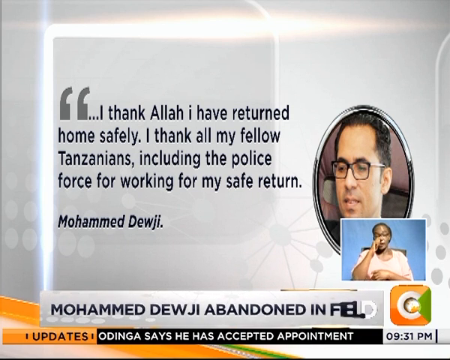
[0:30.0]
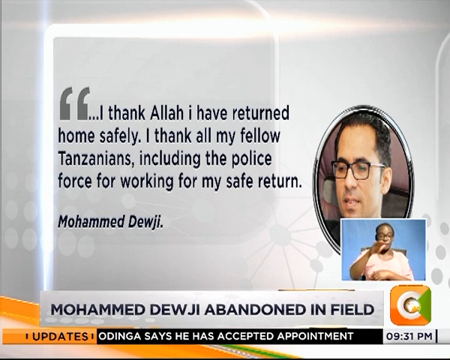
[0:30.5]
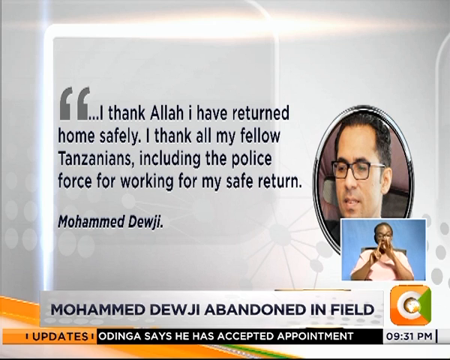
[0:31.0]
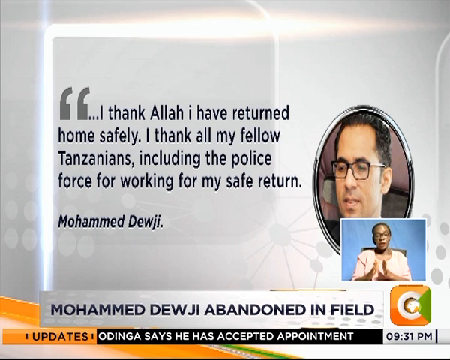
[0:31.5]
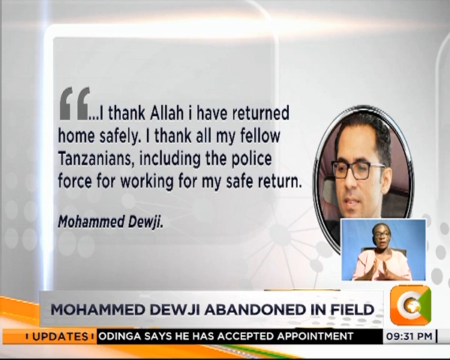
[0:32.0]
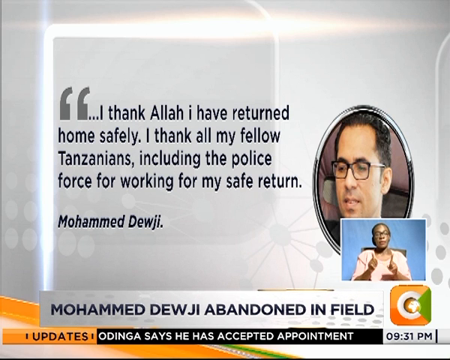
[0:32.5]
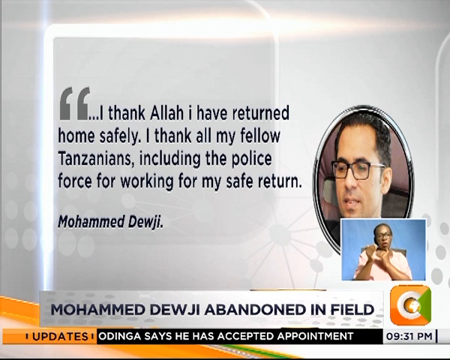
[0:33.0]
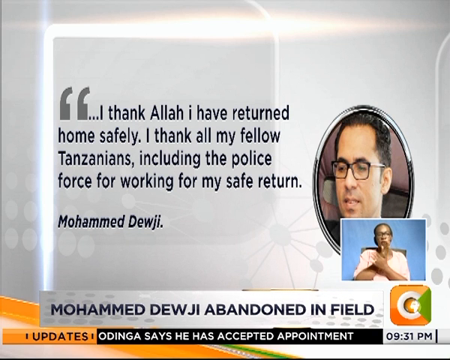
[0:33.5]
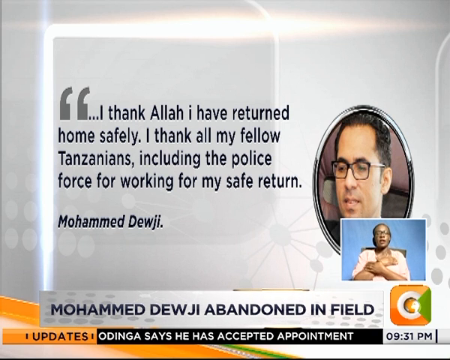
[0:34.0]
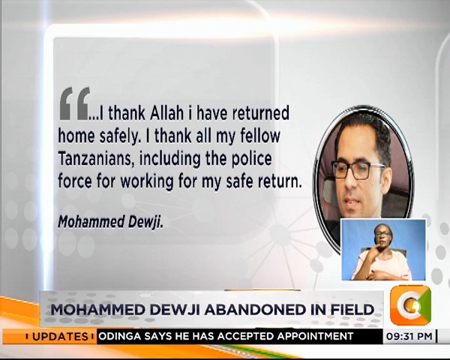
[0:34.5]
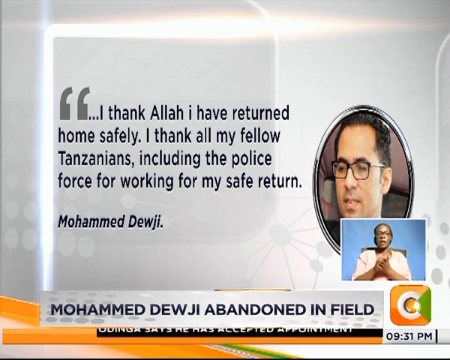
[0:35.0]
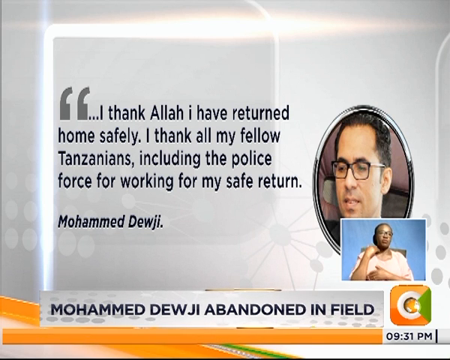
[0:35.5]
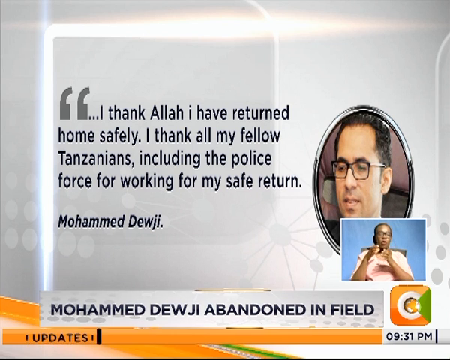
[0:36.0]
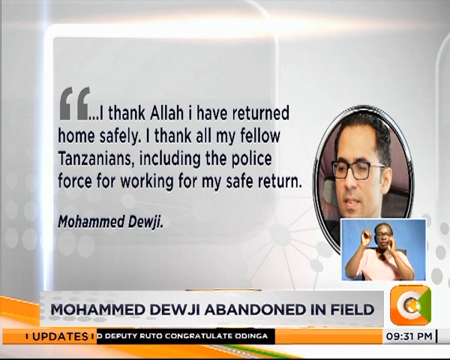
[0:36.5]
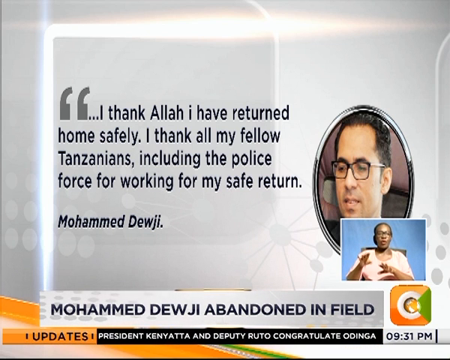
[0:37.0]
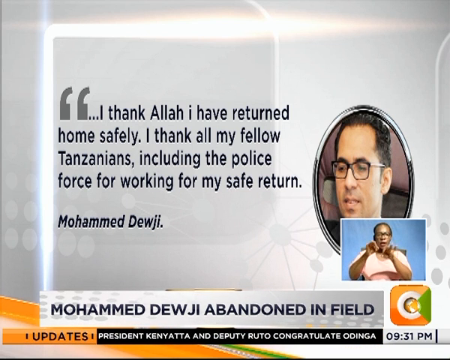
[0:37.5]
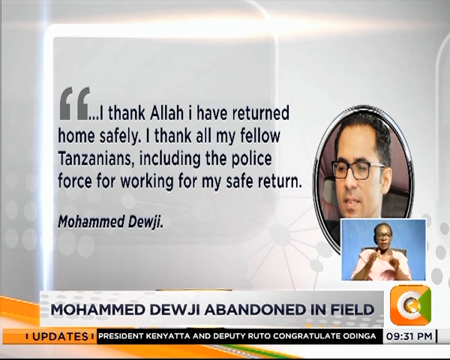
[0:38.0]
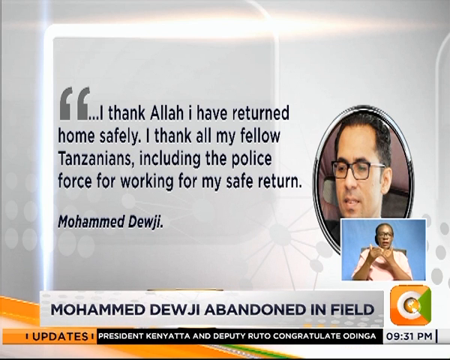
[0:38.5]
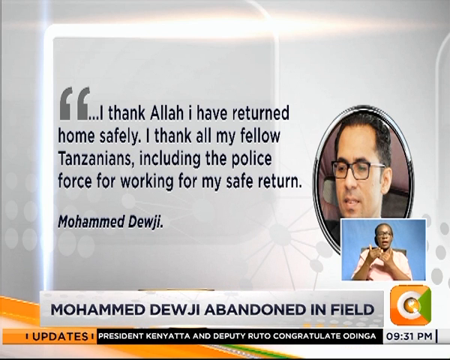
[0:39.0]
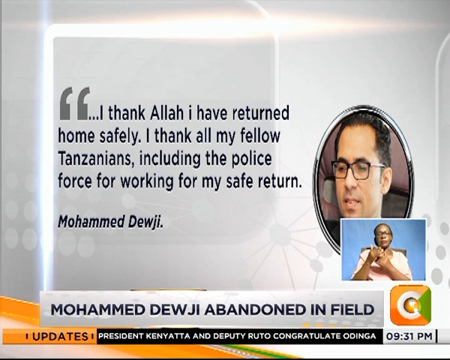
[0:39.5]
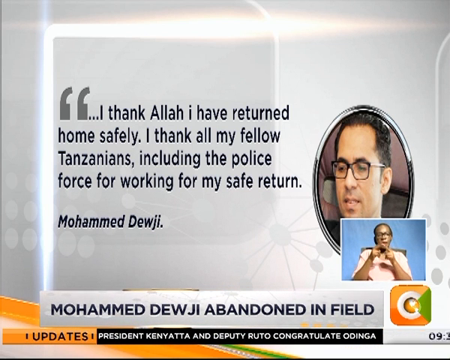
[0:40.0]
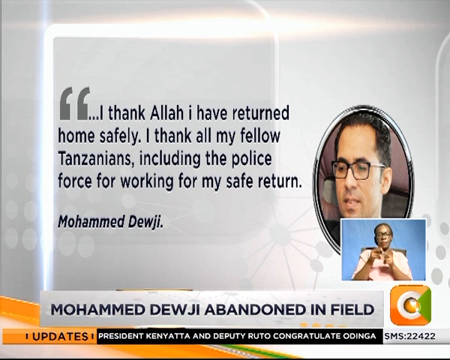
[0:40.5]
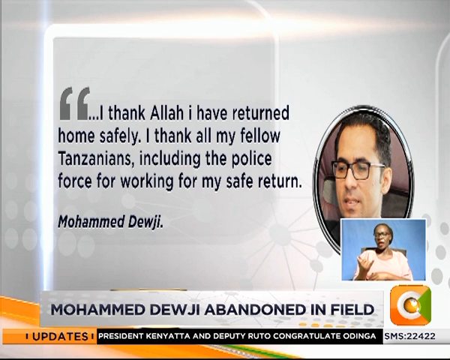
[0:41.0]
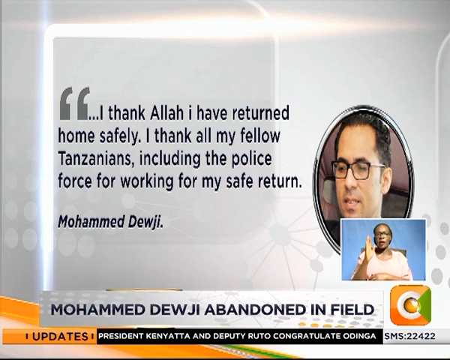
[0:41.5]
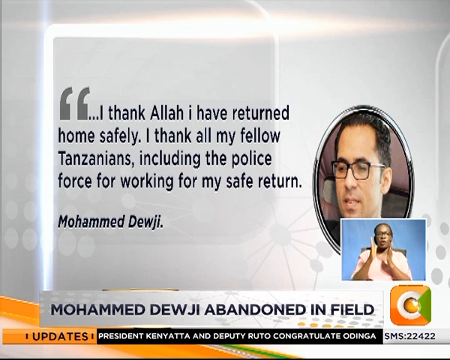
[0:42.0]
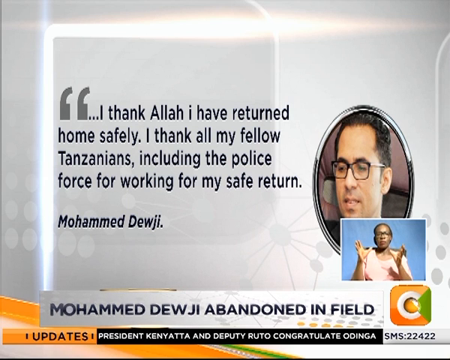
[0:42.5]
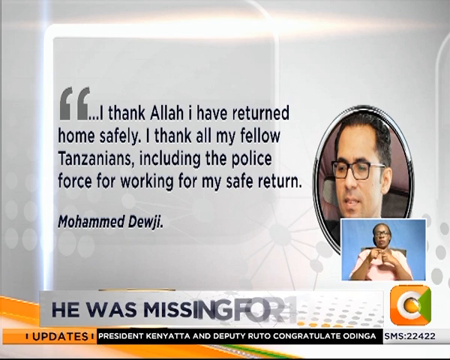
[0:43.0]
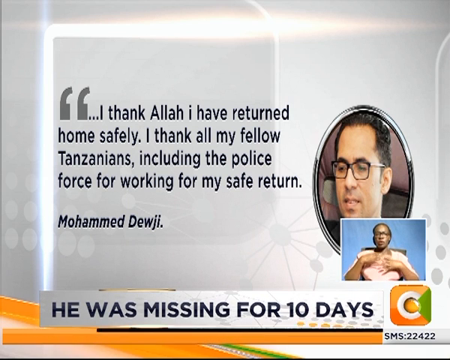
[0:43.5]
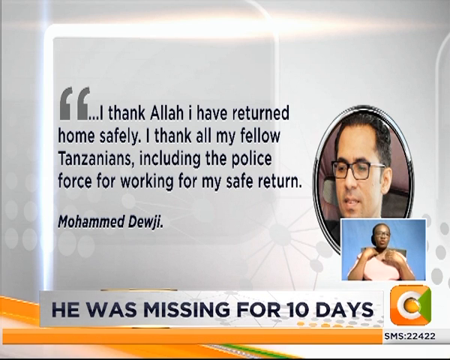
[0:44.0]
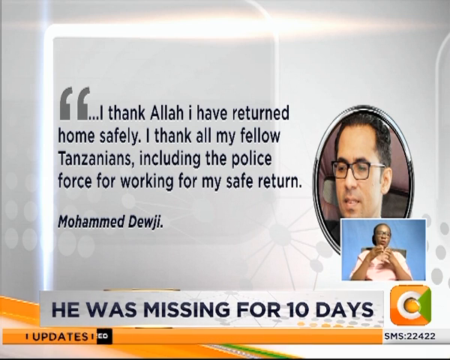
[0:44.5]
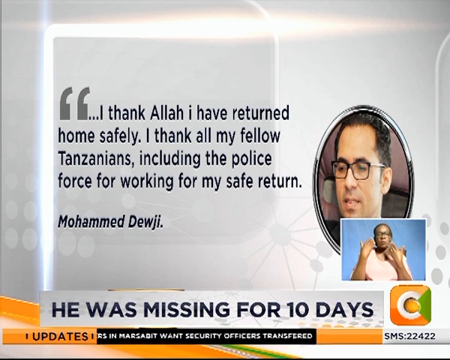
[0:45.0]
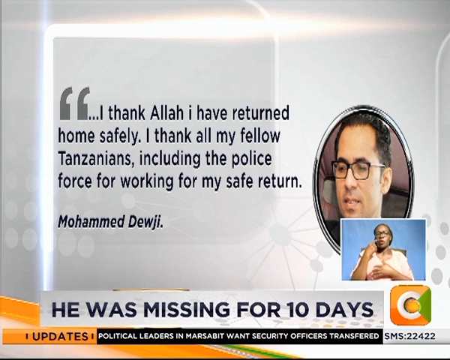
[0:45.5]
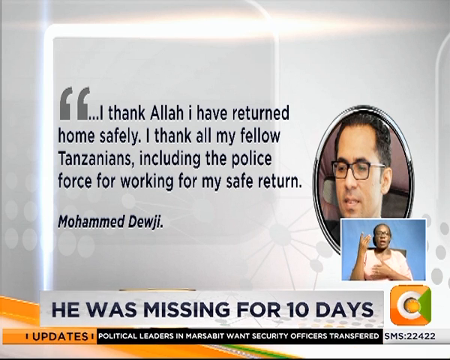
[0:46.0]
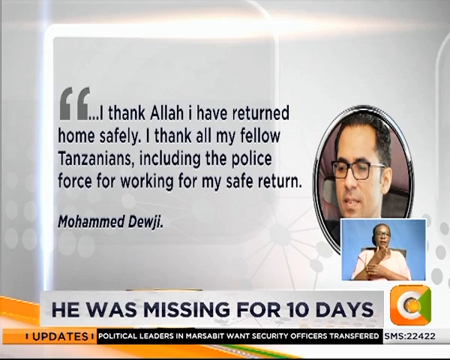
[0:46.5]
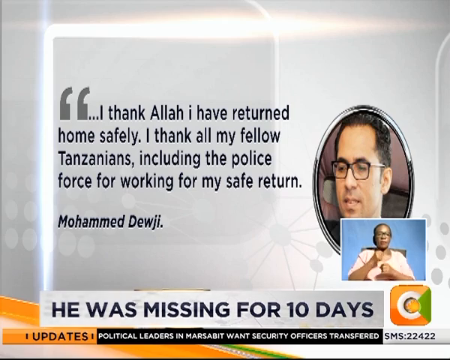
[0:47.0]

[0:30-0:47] The news continues with Mohamed Georgi being abandoned in a field: the billionaire was abandoned in a field on his way home from the kidnapping, after being missing for 10 days. The news anchor disappears, leaving the sign language news anchor and a picture of the billionaire on the screen. Weekend news updates follow, including items about Kenyatta, Kogan appointing Abdi Akhtarik for infrastructural development, and Odinga being appointed by the Afghan Union. The video closes with the news anchor removing herself from the studio.